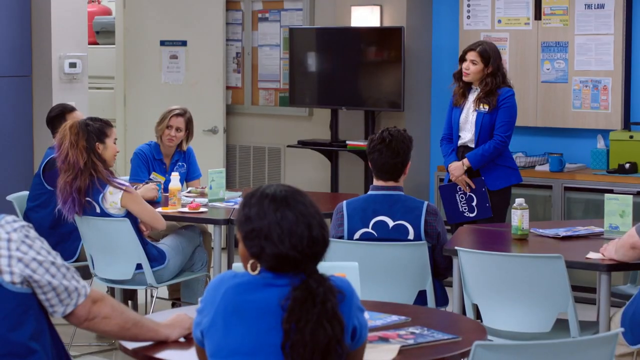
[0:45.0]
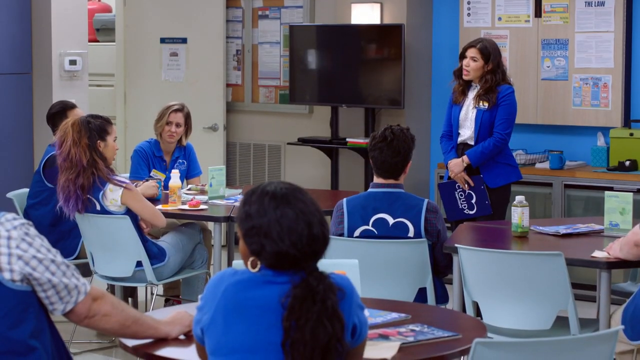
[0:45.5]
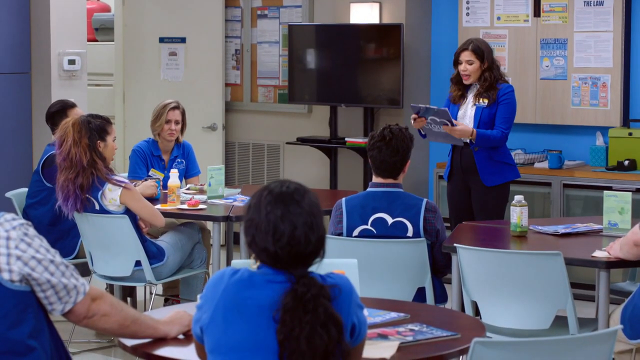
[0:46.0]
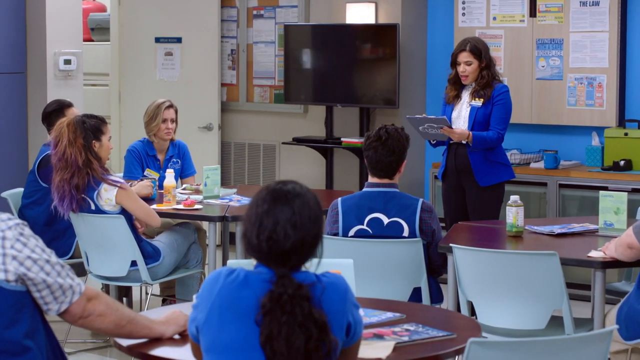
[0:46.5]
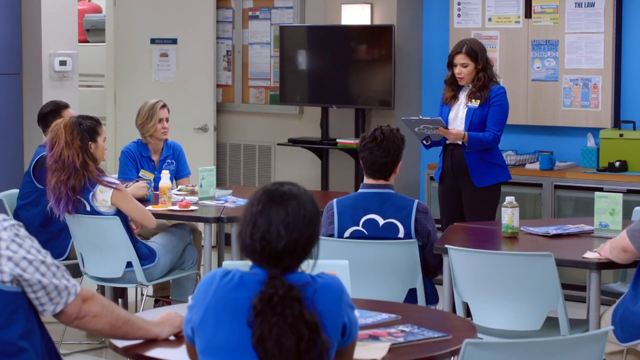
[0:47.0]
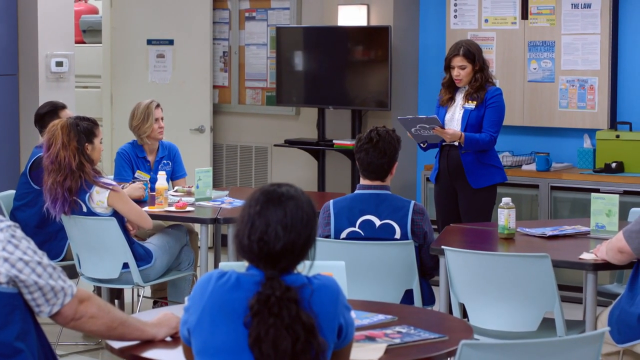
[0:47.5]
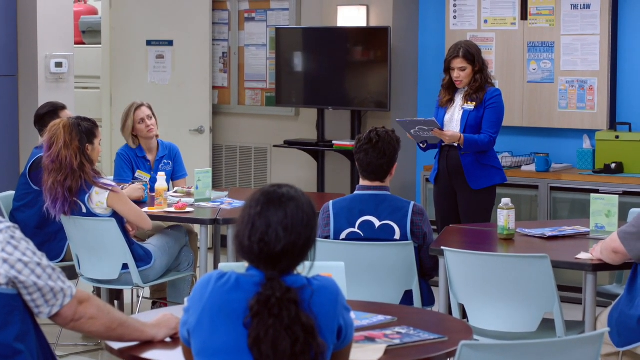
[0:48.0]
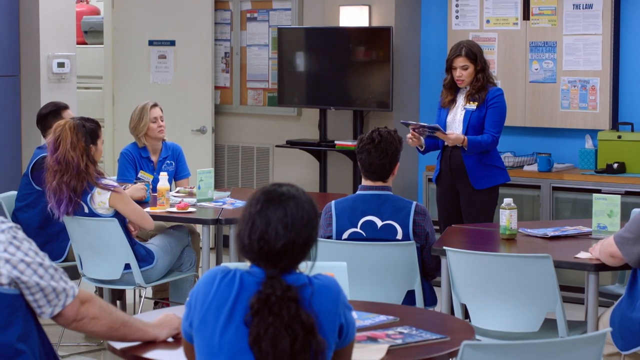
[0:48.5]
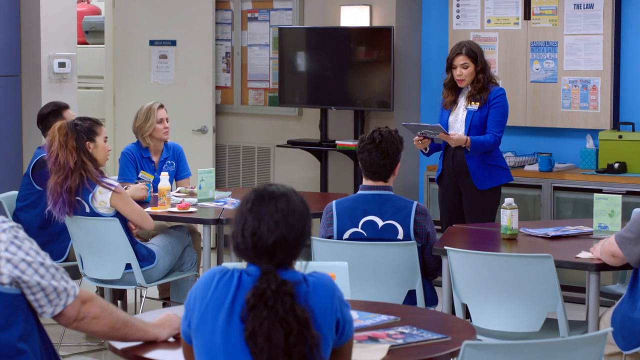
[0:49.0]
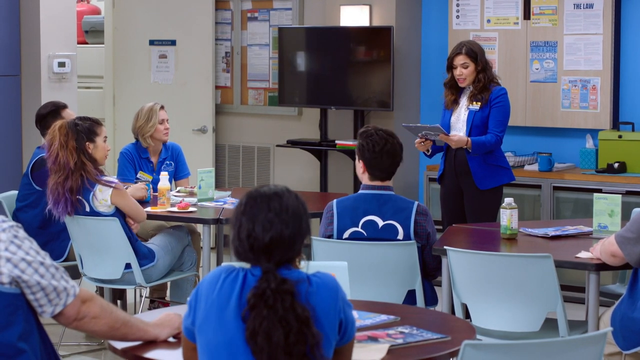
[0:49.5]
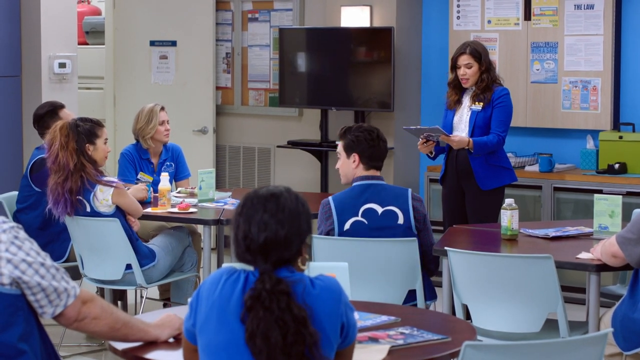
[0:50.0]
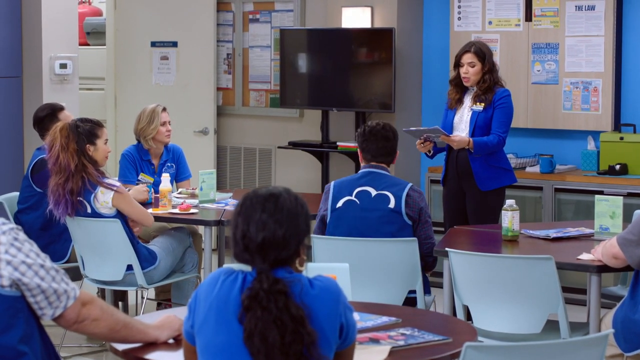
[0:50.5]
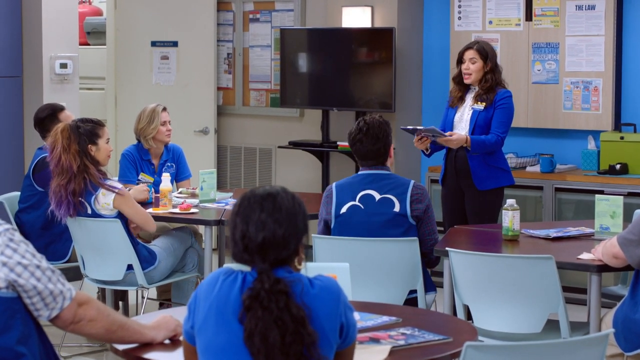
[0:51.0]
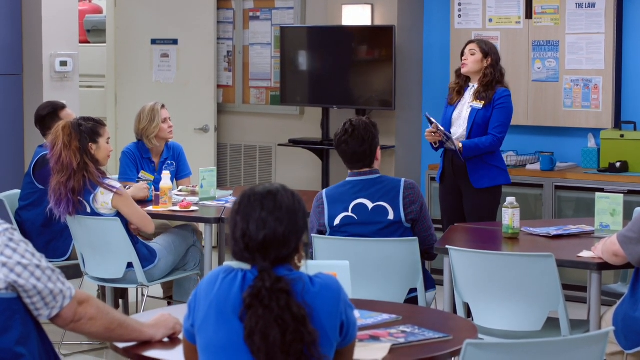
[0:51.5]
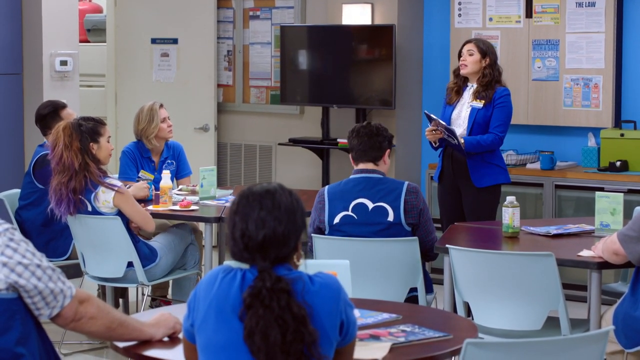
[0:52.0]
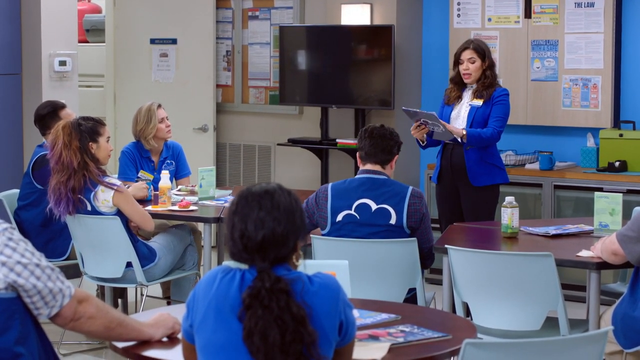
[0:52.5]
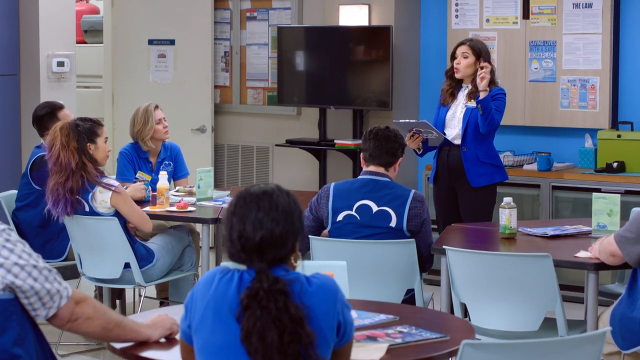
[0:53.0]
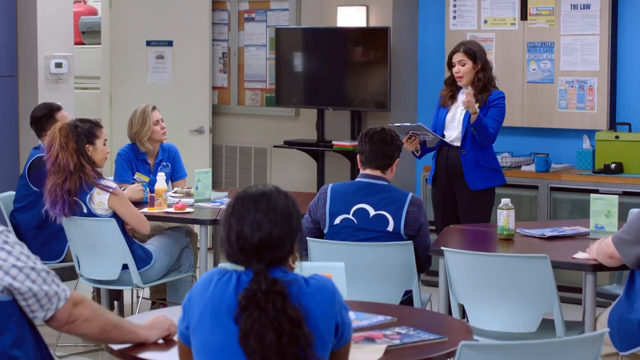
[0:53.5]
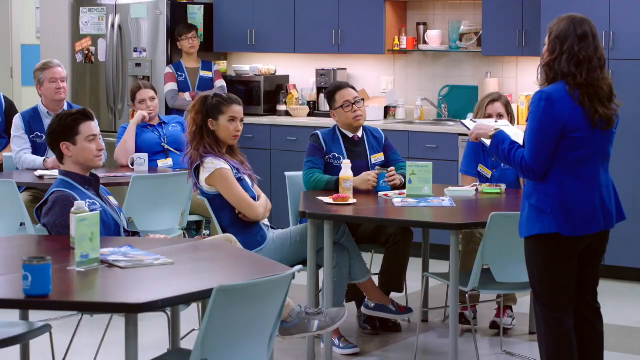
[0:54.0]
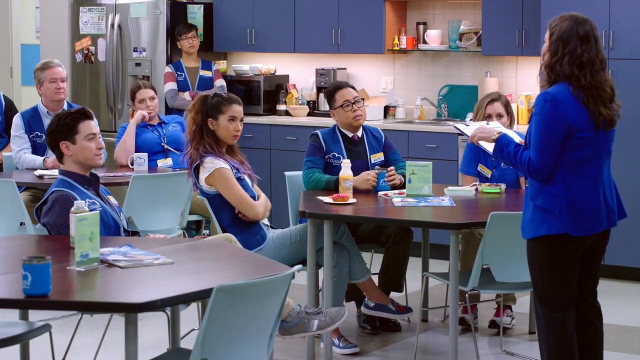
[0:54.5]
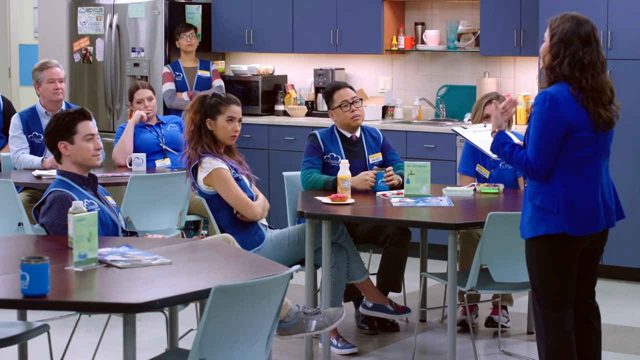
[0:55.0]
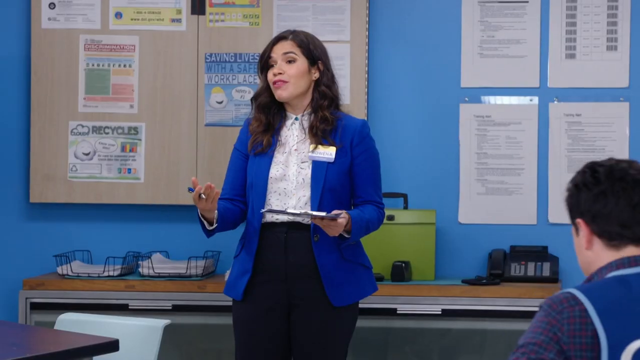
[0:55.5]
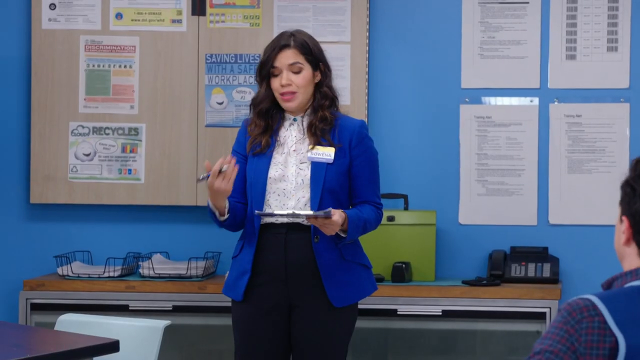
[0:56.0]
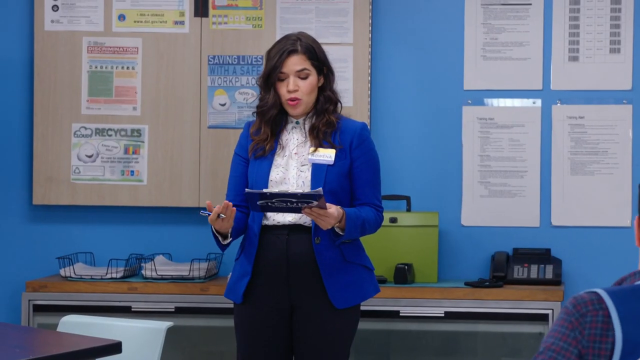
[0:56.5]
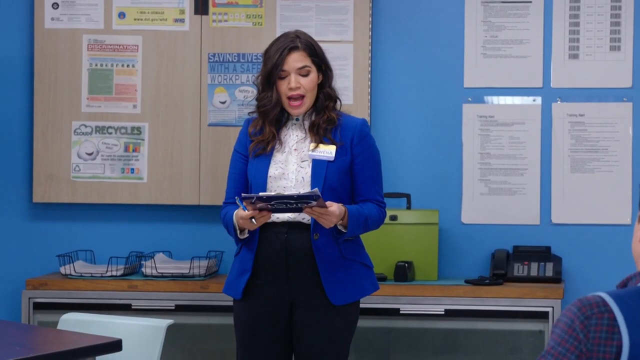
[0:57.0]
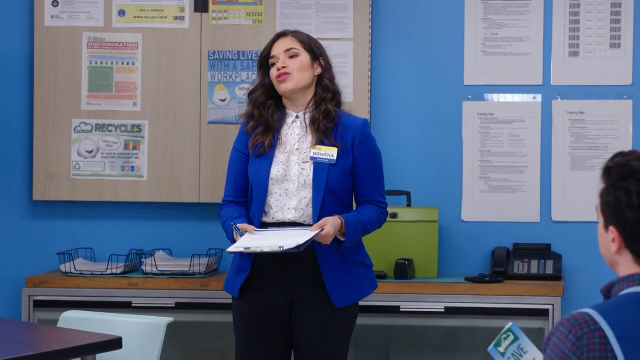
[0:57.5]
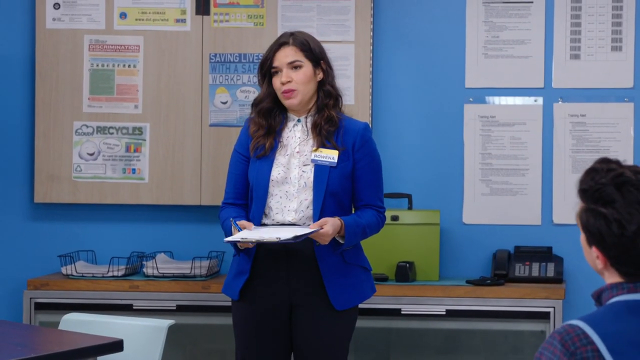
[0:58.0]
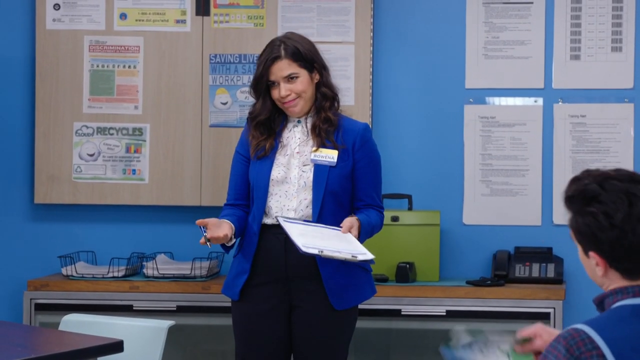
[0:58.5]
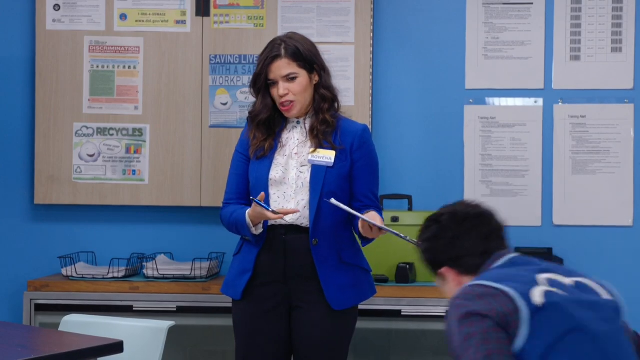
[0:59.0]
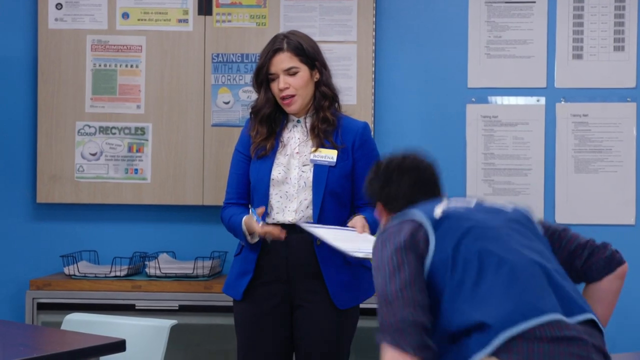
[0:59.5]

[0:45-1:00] The professional woman standing at the front of the room speaks more frantically, her hands moving much more as she jots notes in her scratchpad. Her head moves up and down as she speaks, and she gestures as if trying to convince the people sitting around her of something important. The camera pans from behind her toward the seated audience in front of her, all with neutral expressions. It then pans to face her front again with her as the primary focus, and a man sitting in the bottom right corner of the screen stands up and moves toward her, as if to say something alongside her to help her out.